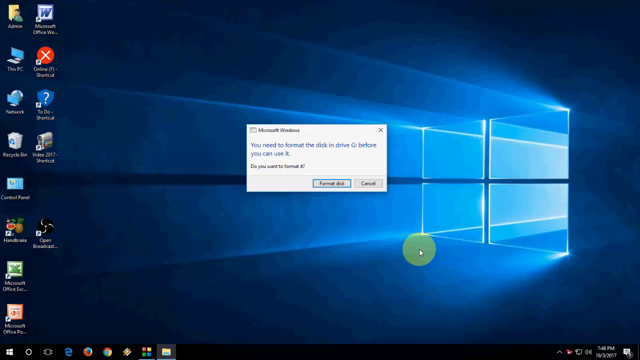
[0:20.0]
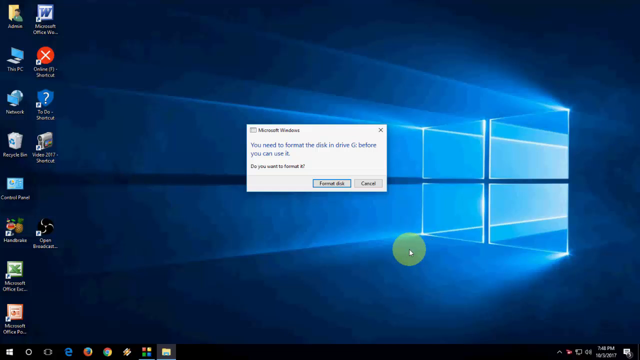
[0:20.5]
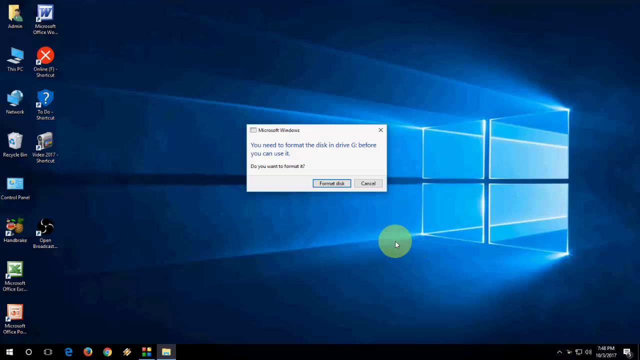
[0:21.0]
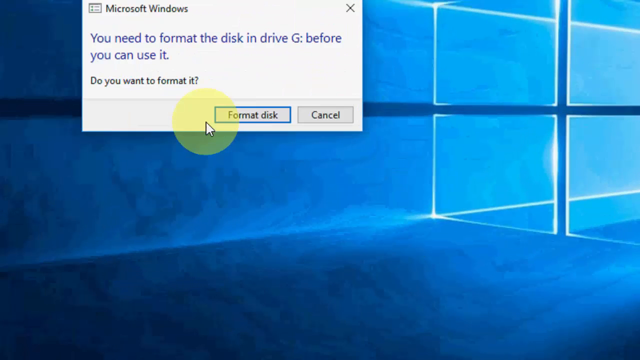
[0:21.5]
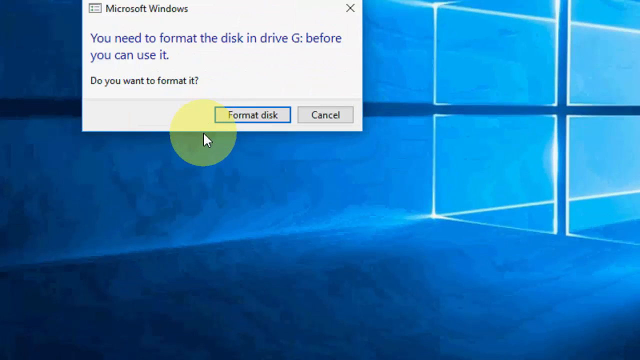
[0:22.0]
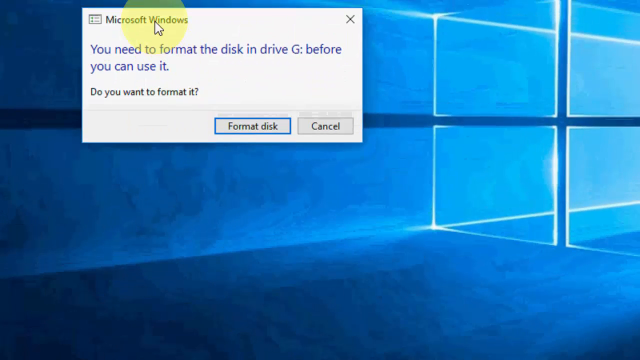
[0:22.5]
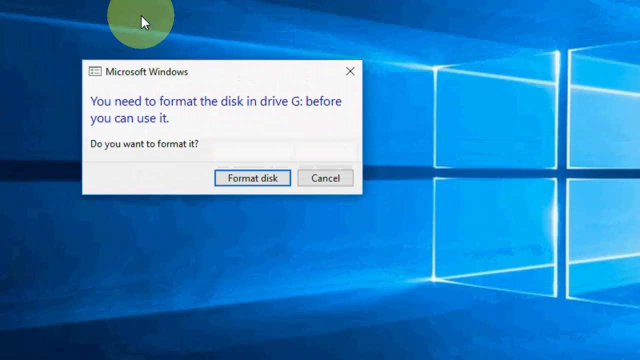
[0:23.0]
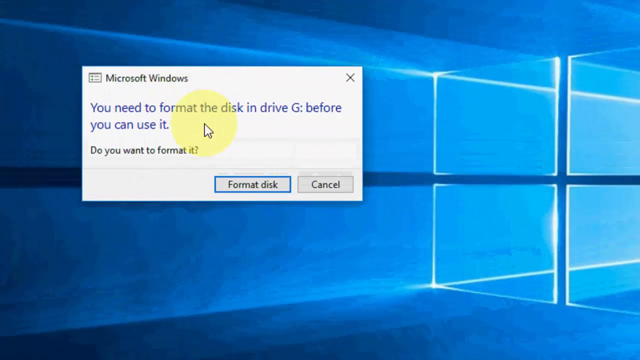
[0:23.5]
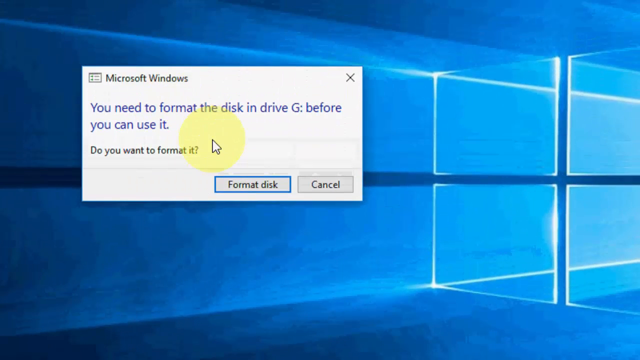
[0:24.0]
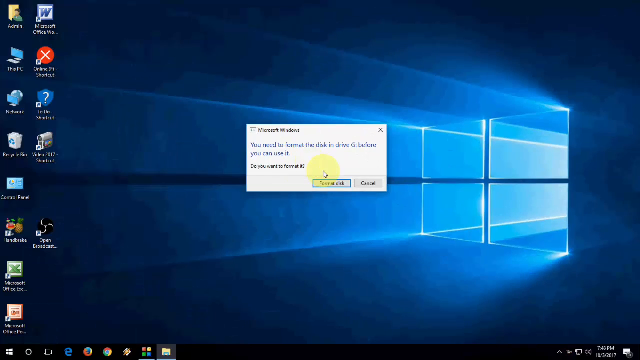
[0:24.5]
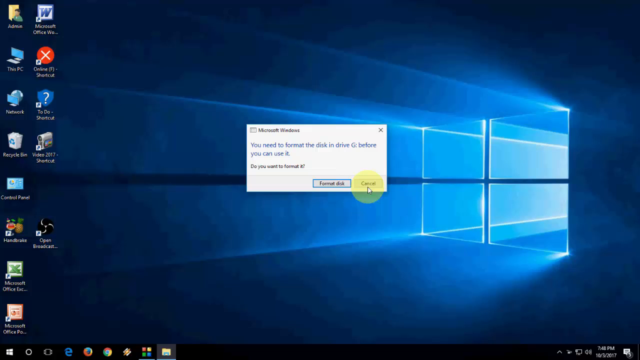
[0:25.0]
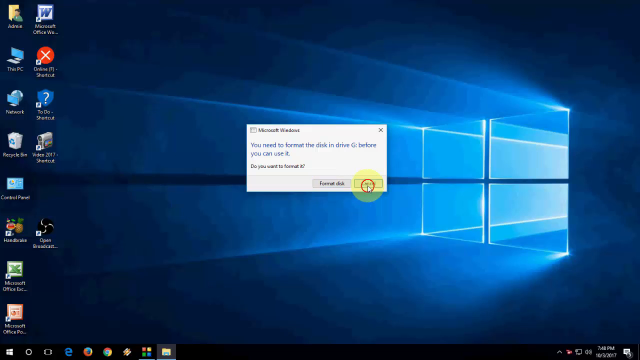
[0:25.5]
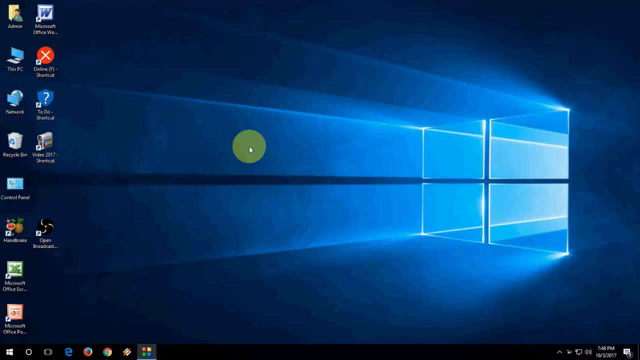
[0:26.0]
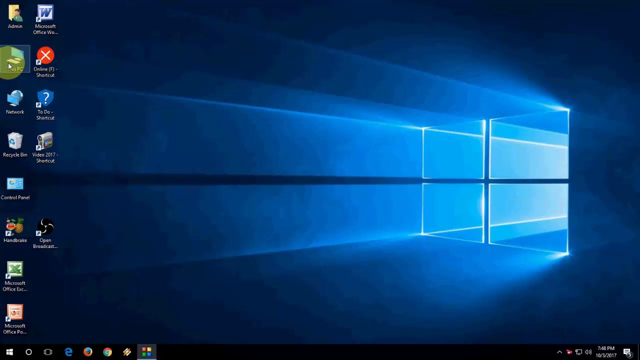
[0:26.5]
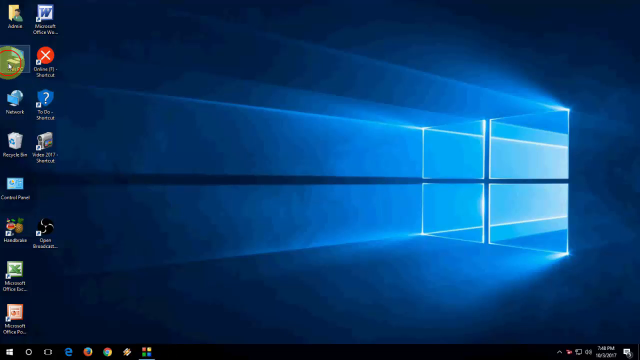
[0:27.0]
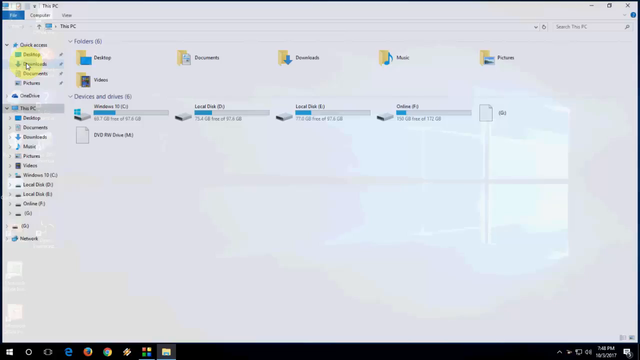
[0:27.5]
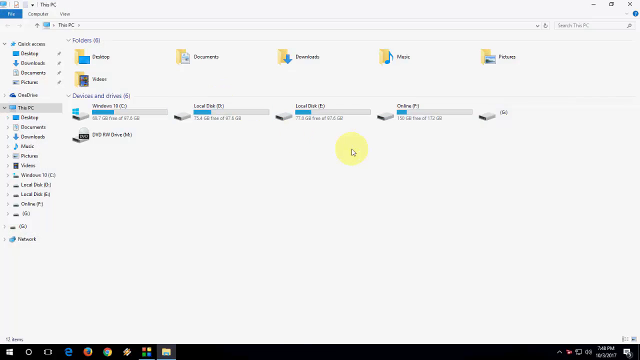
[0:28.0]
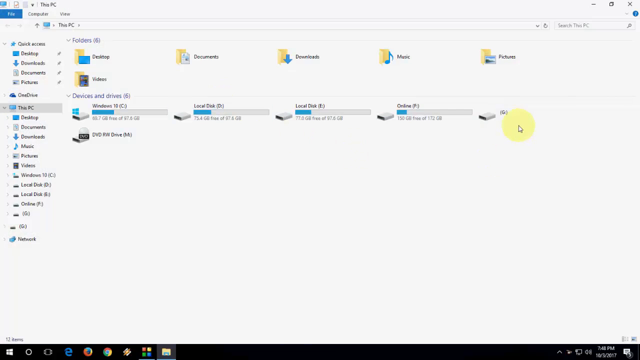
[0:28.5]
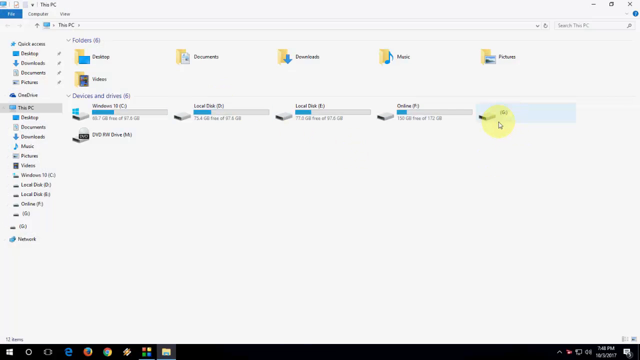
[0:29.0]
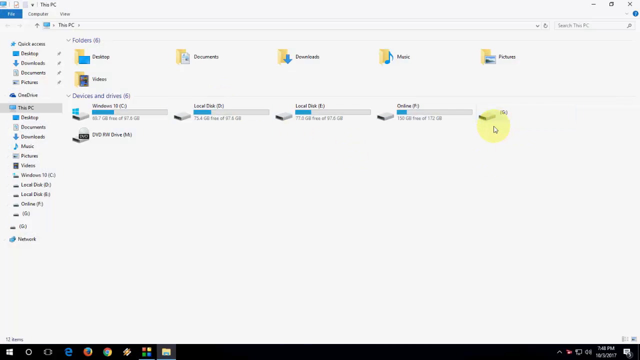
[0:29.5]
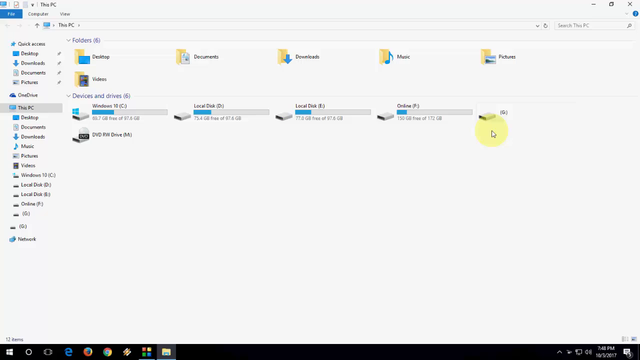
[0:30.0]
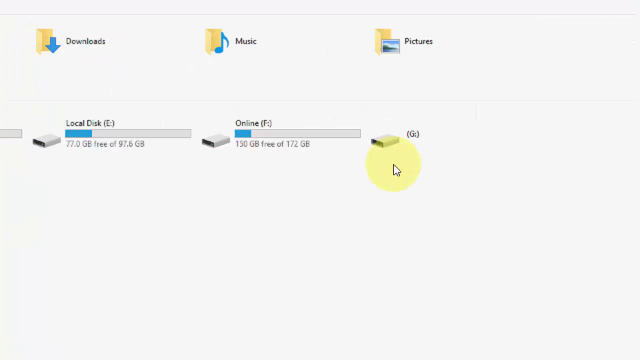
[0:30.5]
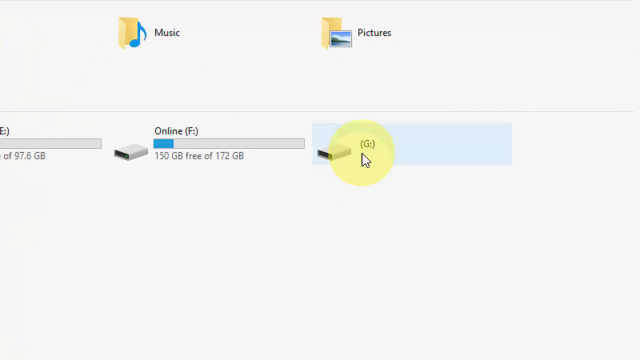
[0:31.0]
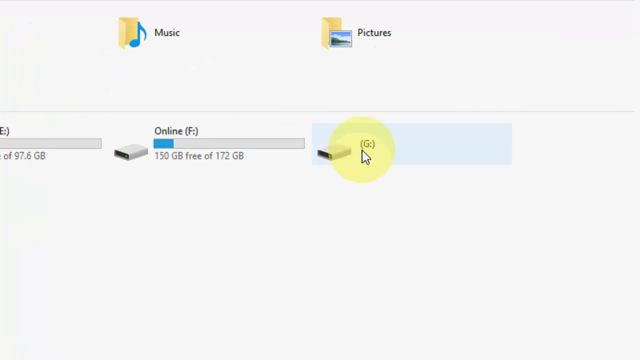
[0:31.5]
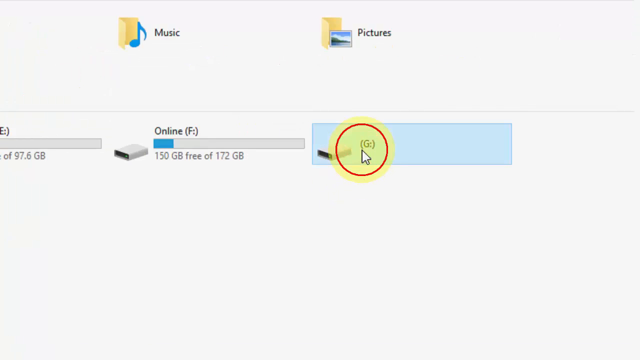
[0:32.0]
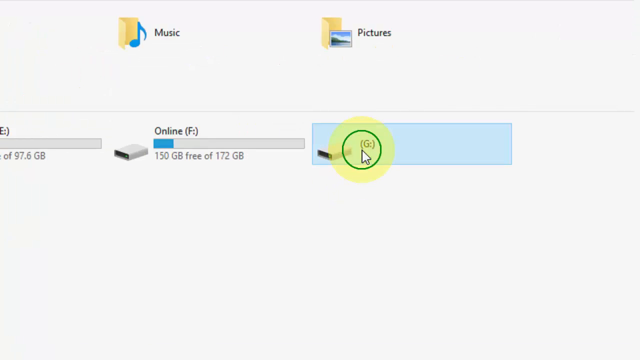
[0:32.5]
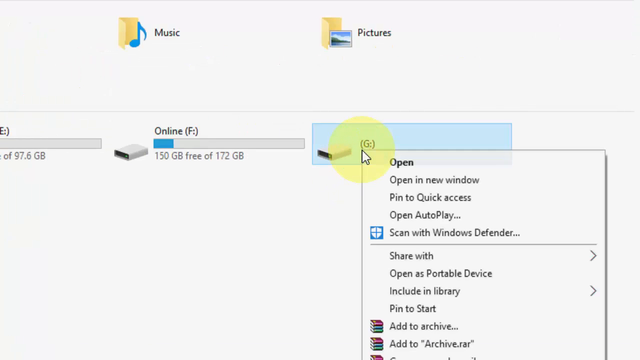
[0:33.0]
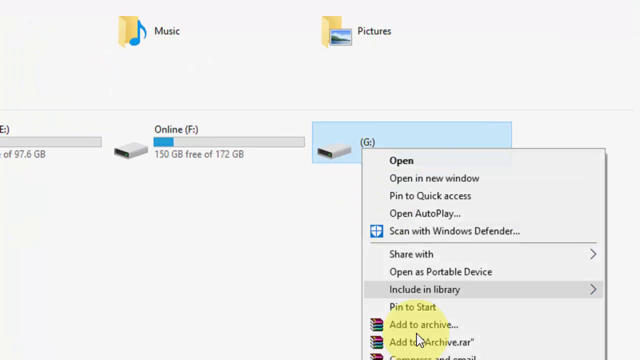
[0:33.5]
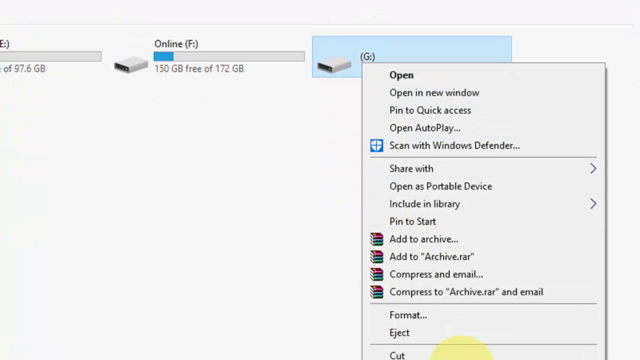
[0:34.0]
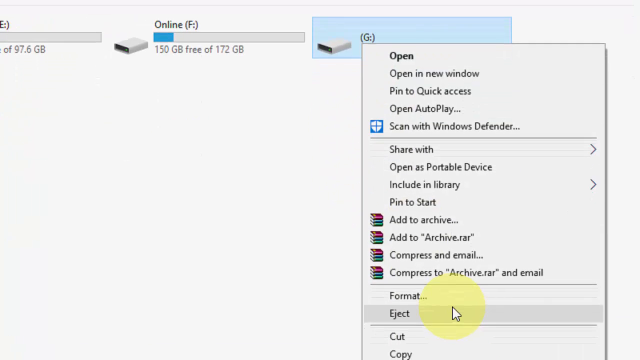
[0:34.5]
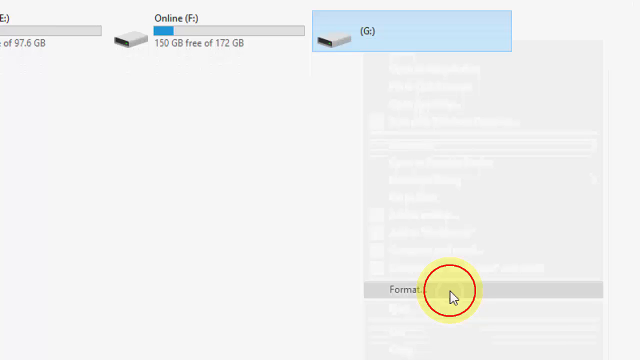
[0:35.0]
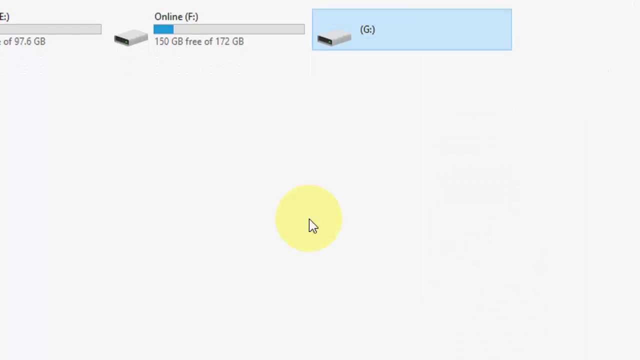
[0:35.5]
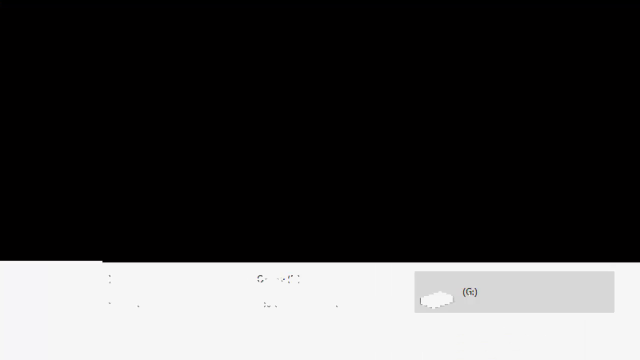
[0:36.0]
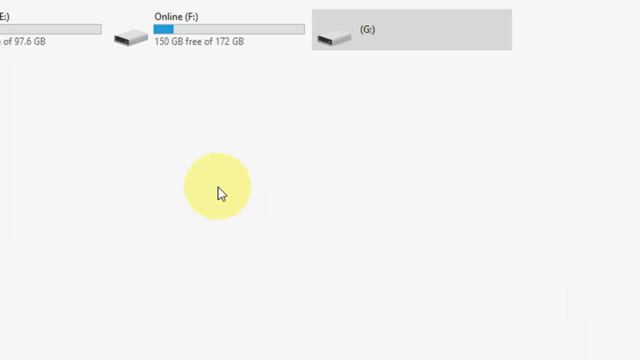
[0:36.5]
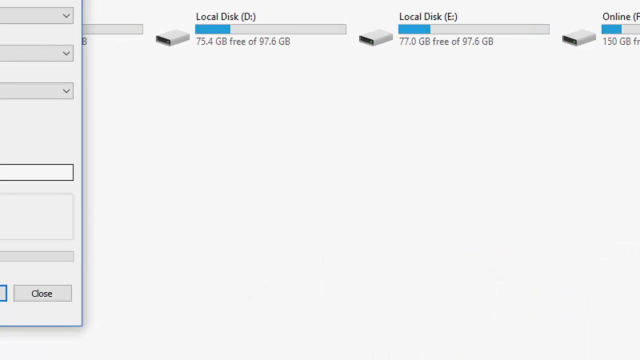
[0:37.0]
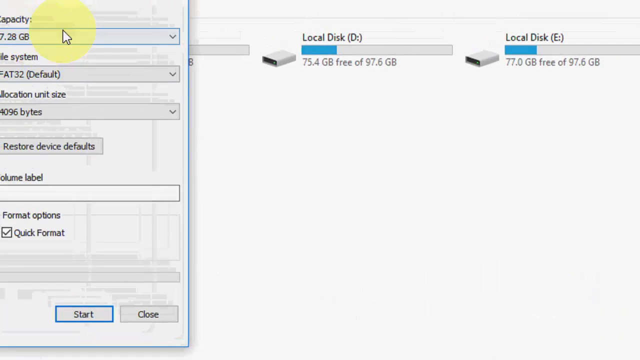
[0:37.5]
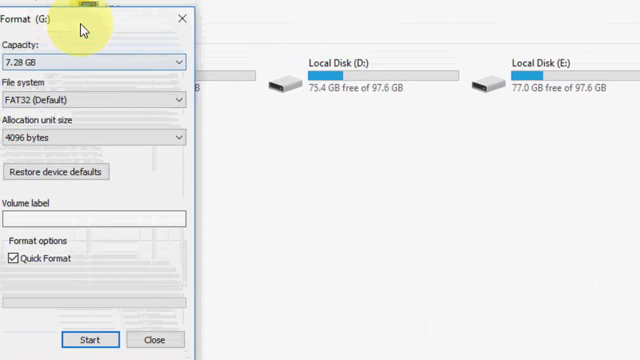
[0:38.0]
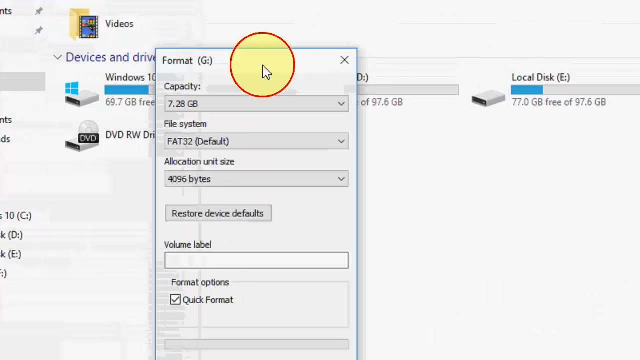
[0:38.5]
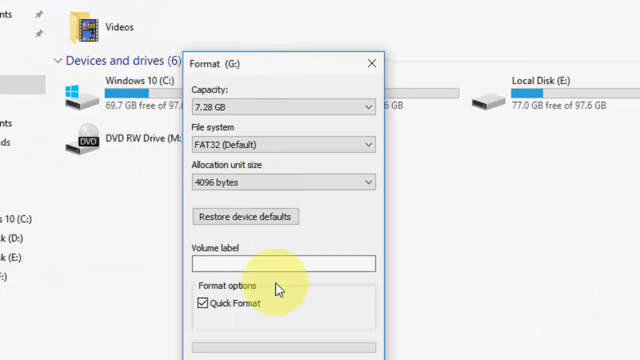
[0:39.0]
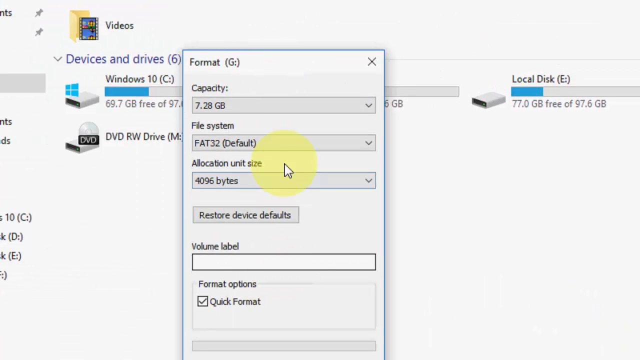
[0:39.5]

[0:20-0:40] The person using the computer zooms in on the pop-up on the screen, titled "Microsoft Windows", which reads "You need to format the disk in Drive G before you can use it. Do you want to format it?" with the options "Format disk" and "Cancel". The mouse moves, with a yellow hollow glow around it, and the person clicks no on the option to format the disk. They then open My Computer, where all the disks and drives are visible, go to drive G, right-click it and choose format from the drop-down menu. A format pop-up appears reading "Format G", with capacity 7.28, file system "FAT32 (default)", allocation unit size "4096 bytes", "restore defaults", a blank volume label, and format options including "quick format".